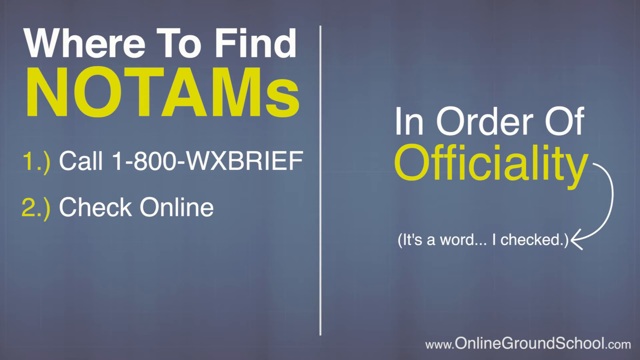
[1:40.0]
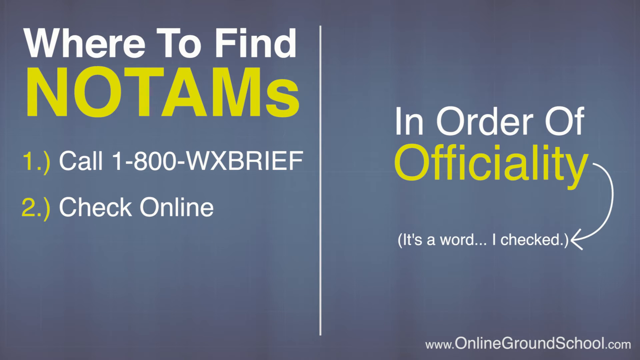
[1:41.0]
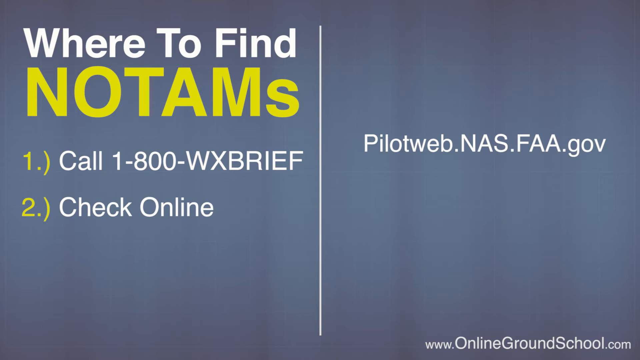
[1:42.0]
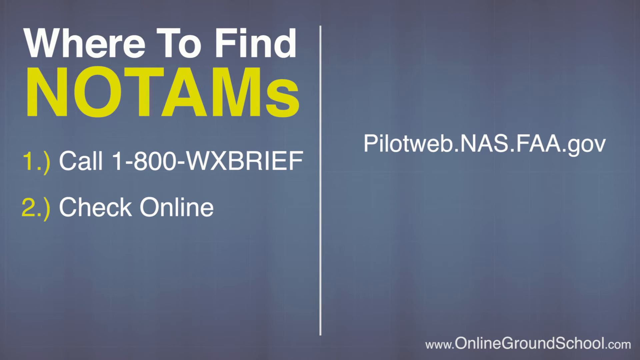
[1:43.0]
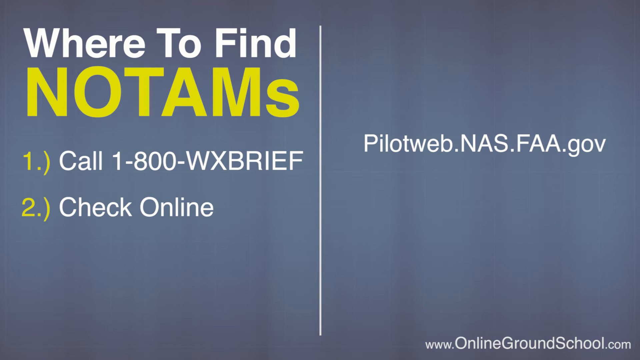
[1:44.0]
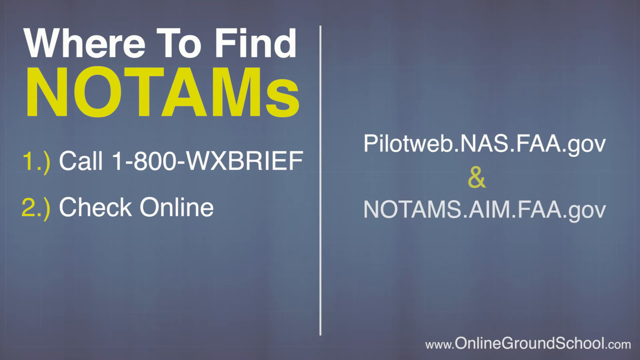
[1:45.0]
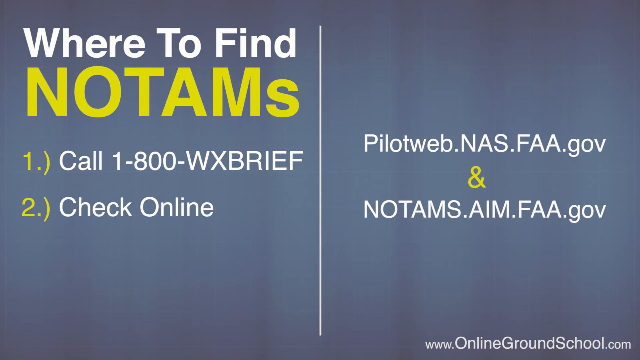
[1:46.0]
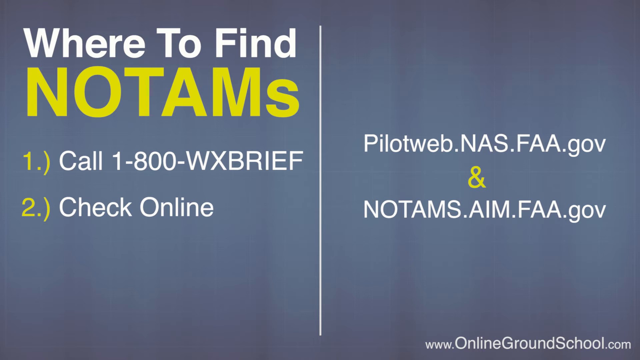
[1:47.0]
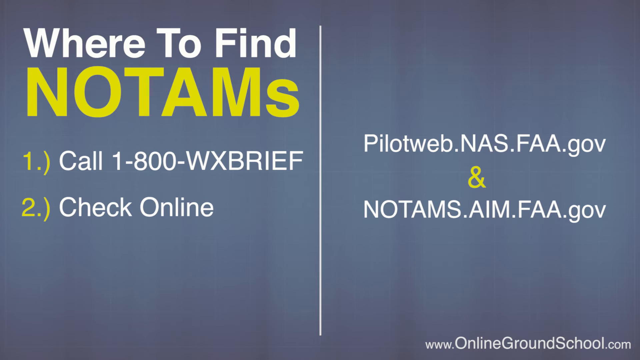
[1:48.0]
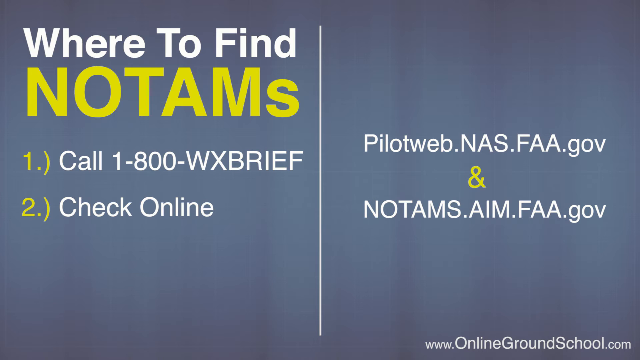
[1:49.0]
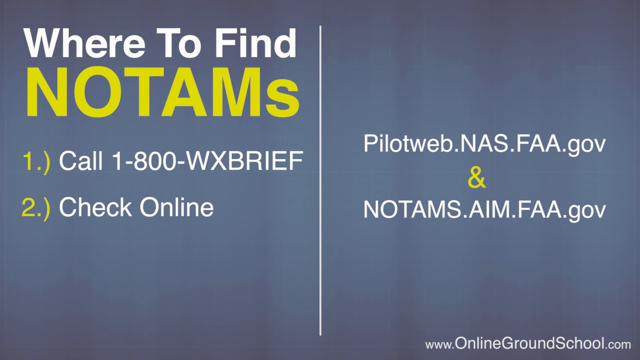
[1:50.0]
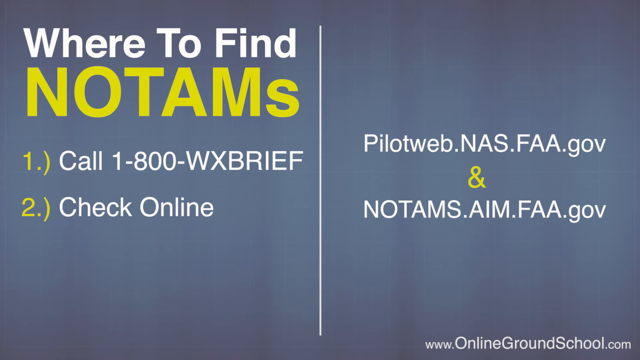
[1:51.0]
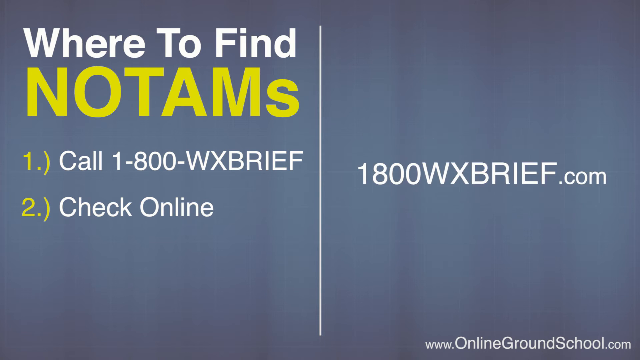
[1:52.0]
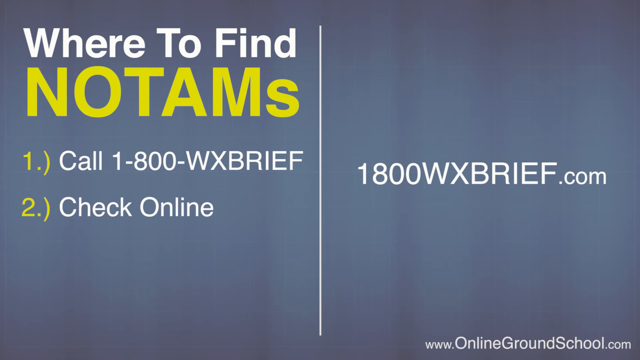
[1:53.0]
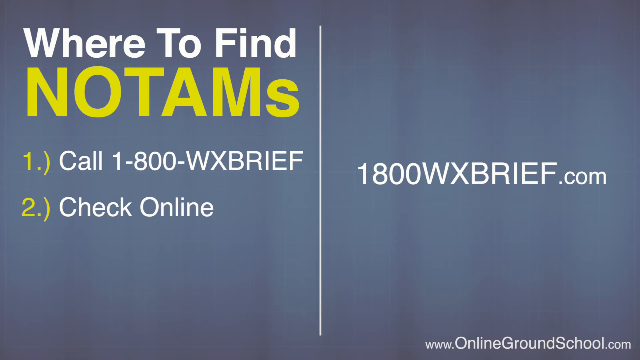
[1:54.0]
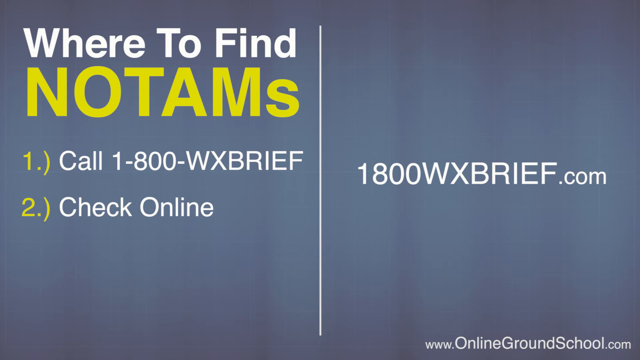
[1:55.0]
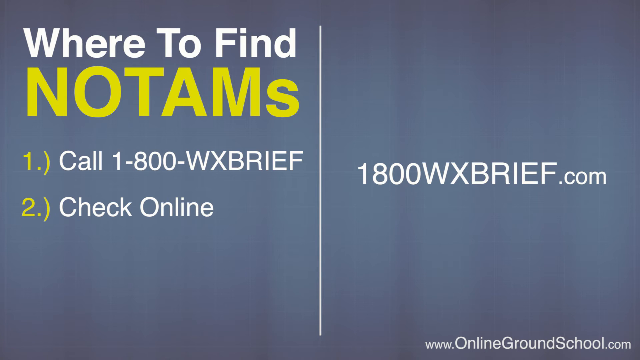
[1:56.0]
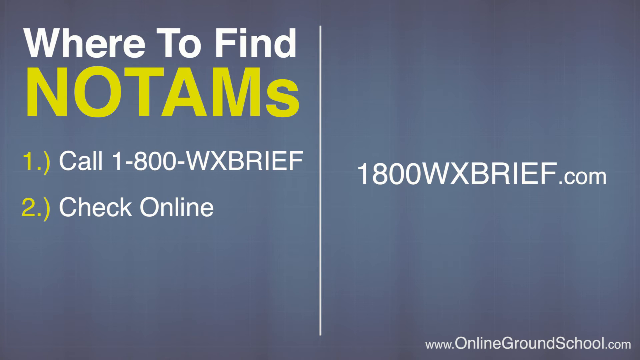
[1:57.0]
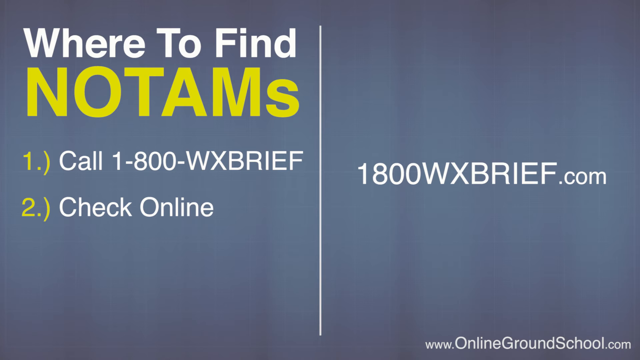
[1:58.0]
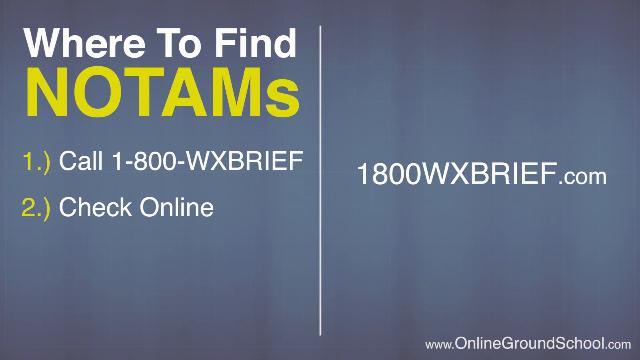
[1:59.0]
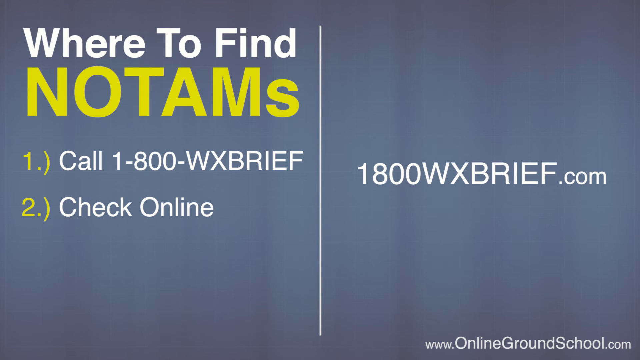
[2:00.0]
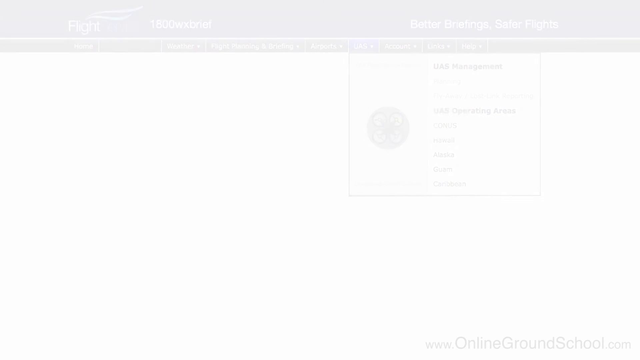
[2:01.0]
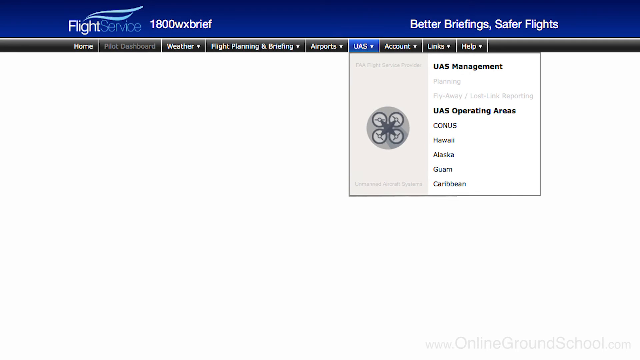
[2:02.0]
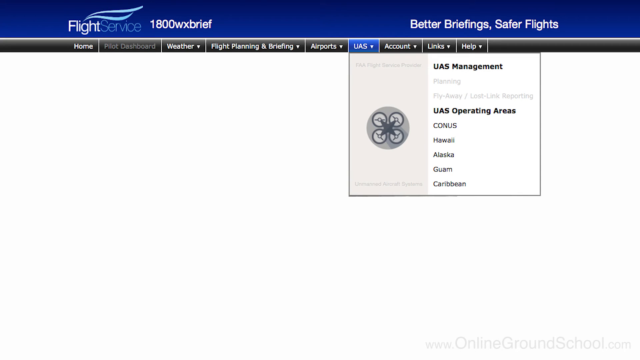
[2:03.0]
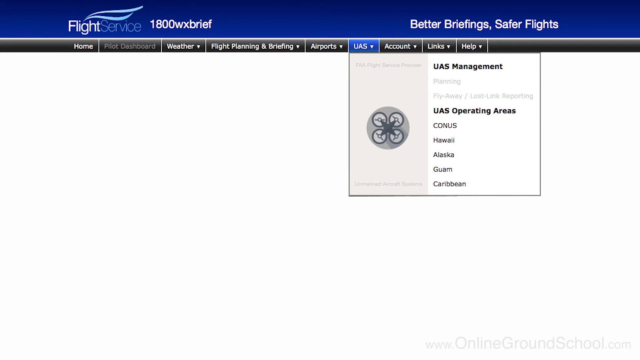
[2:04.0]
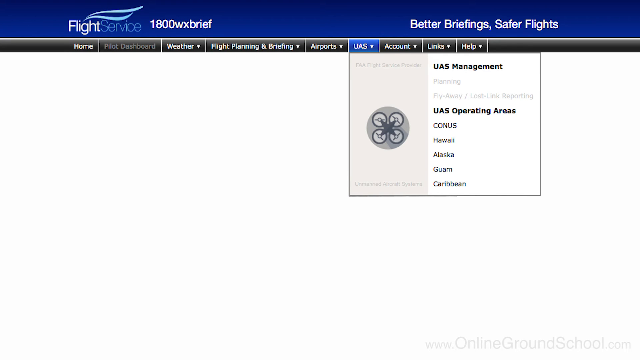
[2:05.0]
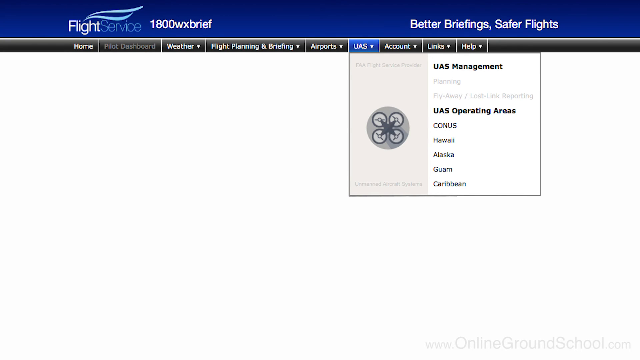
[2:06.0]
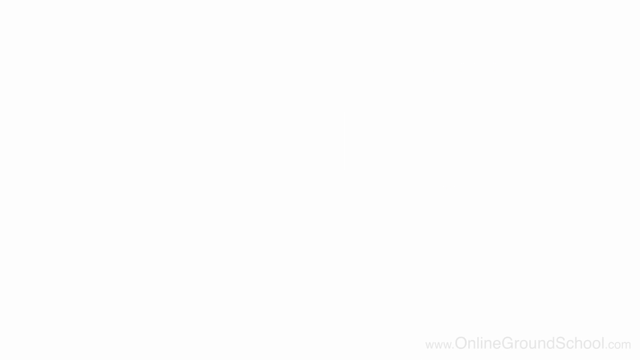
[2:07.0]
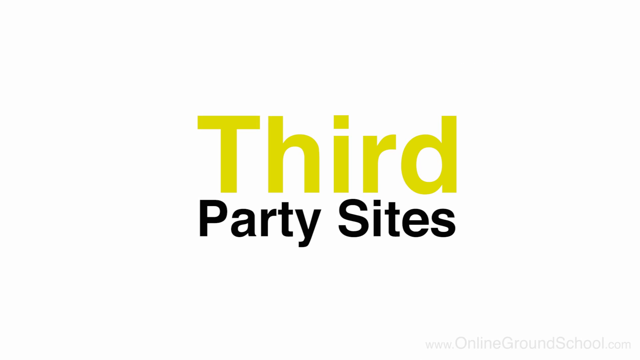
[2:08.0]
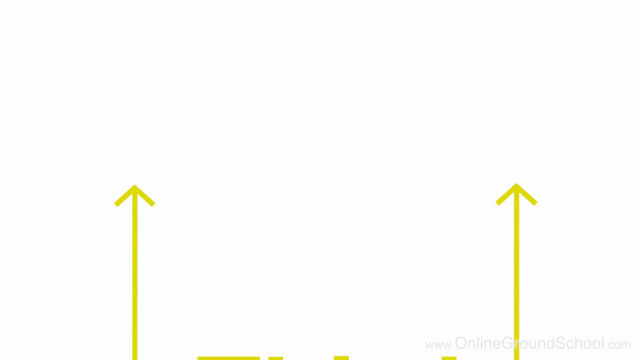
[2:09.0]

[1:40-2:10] A digital presentation-style screen with a solid bluey-grey background is separated by a solid vertical white line down the middle. On the left side, title text reads "Where to find NOTAMs", with two numbered bullet points below it. On the right side is more title text, and an arrow appears, drawing a pointed line down to a sentence in brackets. The right-side text then disappears and a new line appears reading "pilotweb.nas.faa.gov", with an "&" symbol underneath and another web address below that reading "notams.aim.faa.gov". Both disappear, and a new line of text appears on the right reading "1800WXBRIEF.com". A new page then appears showing another image of a computer application for a flight service.